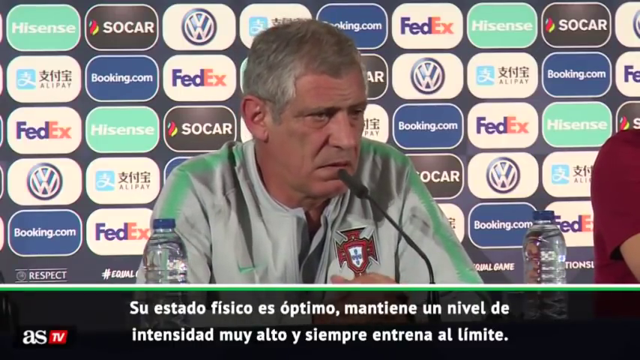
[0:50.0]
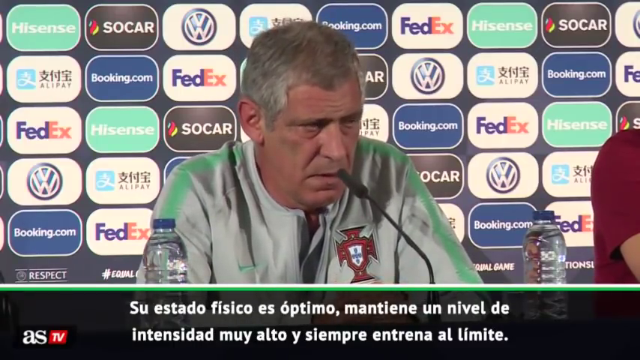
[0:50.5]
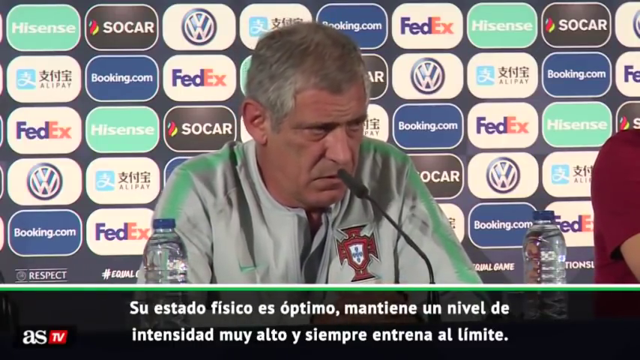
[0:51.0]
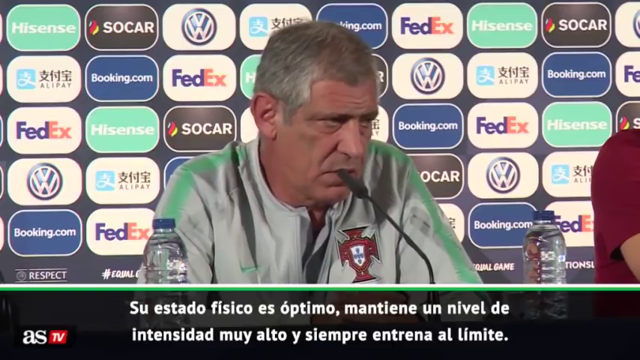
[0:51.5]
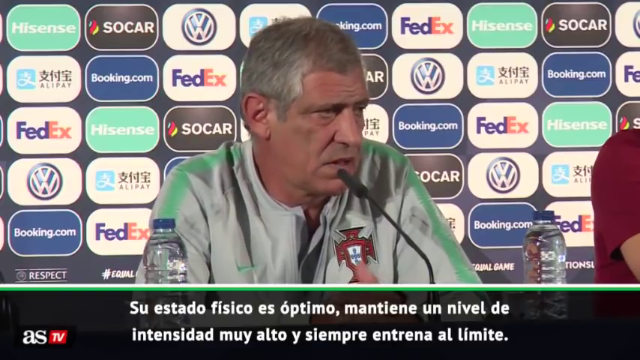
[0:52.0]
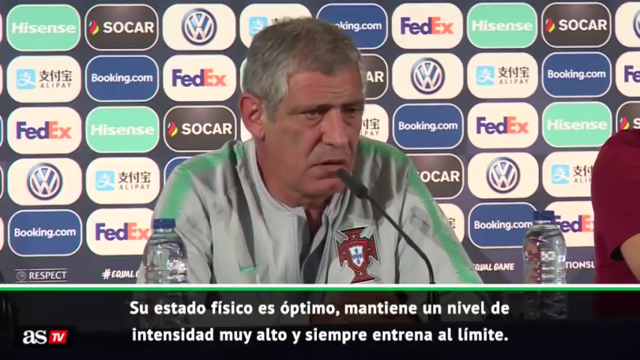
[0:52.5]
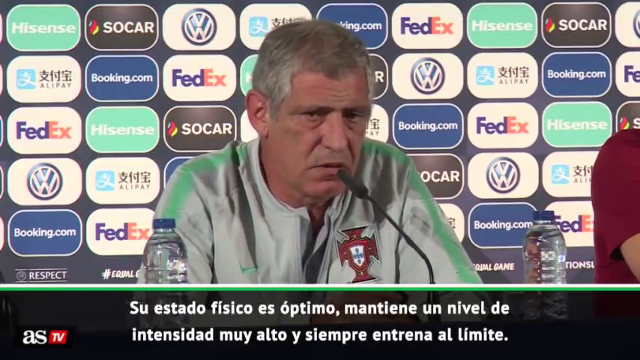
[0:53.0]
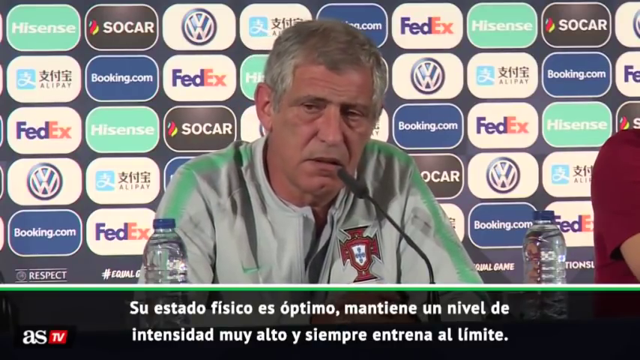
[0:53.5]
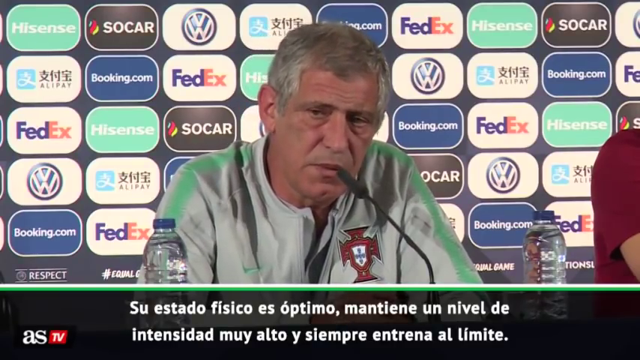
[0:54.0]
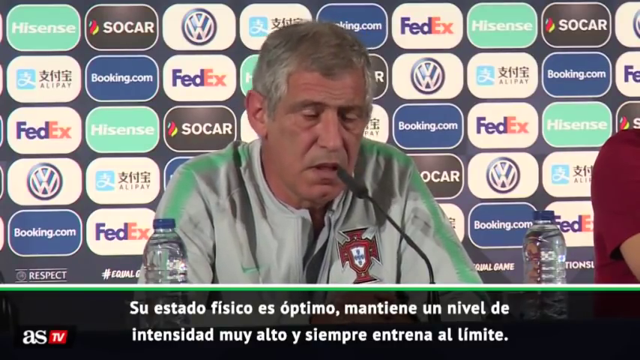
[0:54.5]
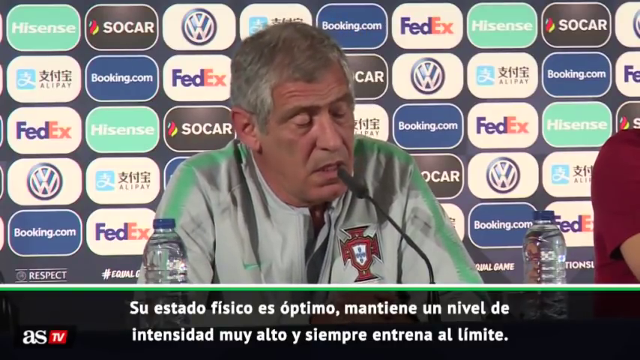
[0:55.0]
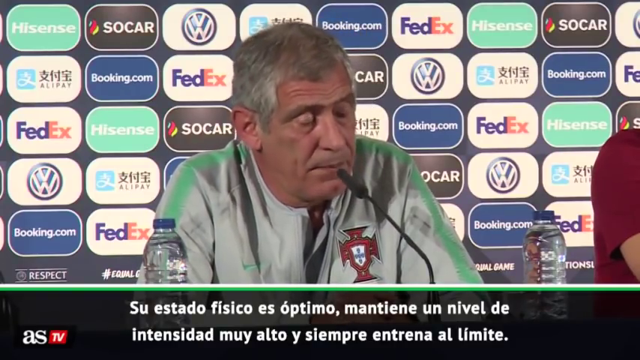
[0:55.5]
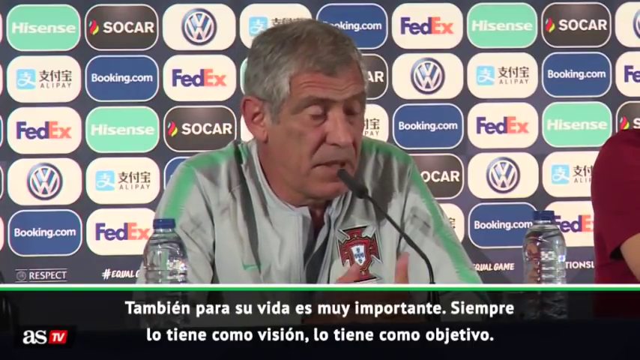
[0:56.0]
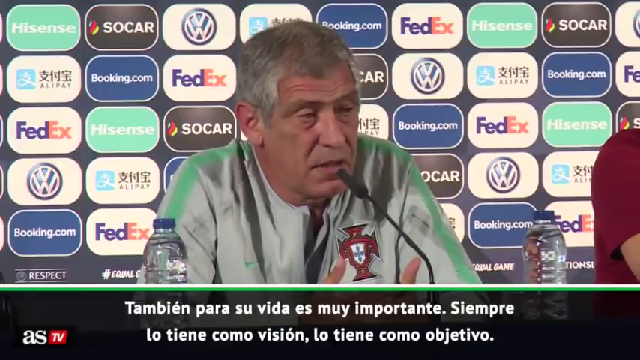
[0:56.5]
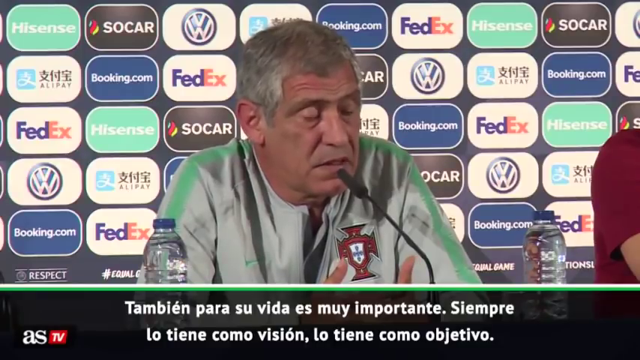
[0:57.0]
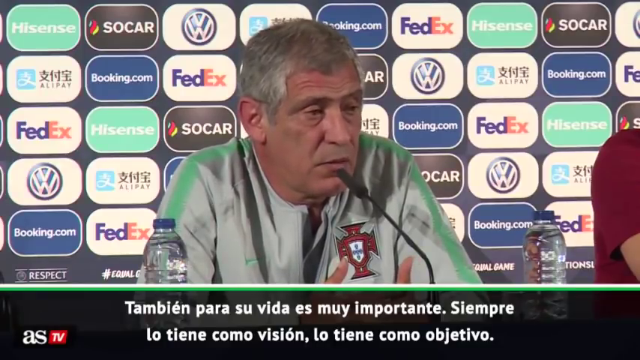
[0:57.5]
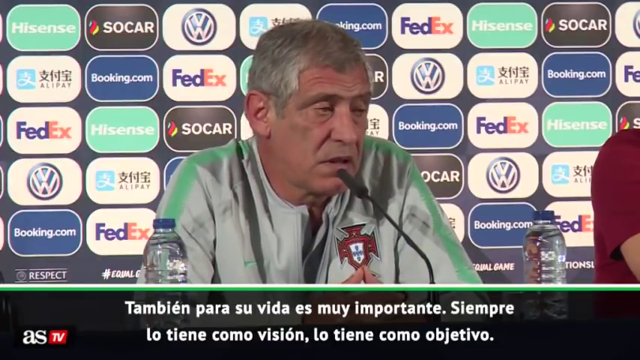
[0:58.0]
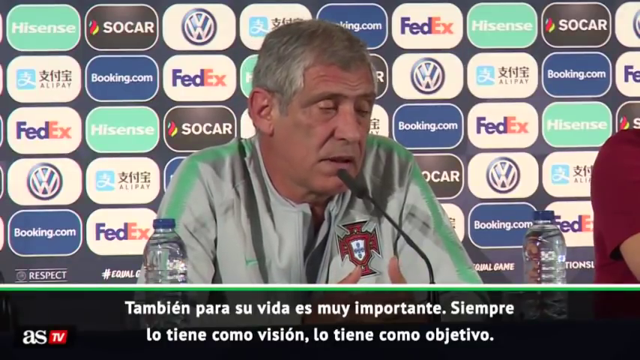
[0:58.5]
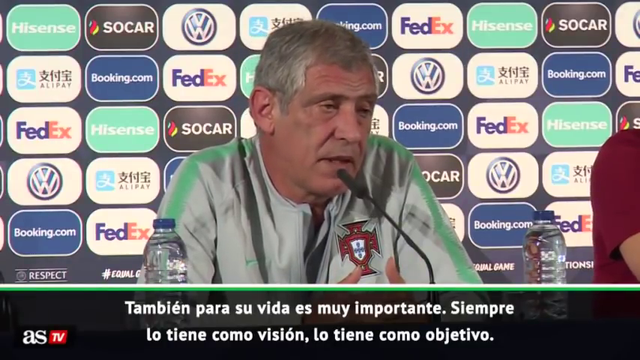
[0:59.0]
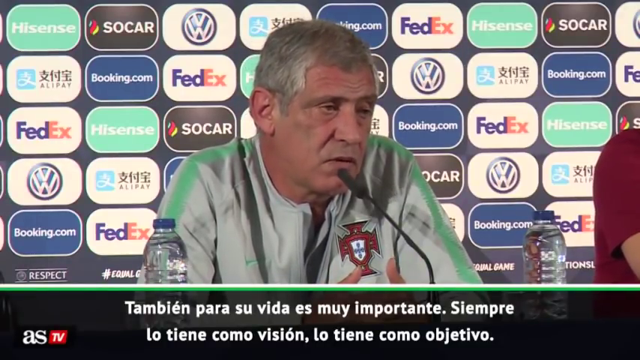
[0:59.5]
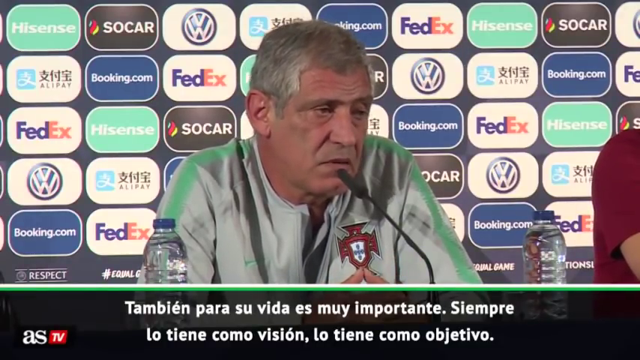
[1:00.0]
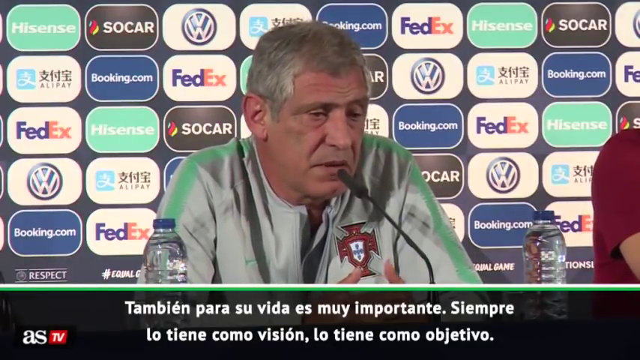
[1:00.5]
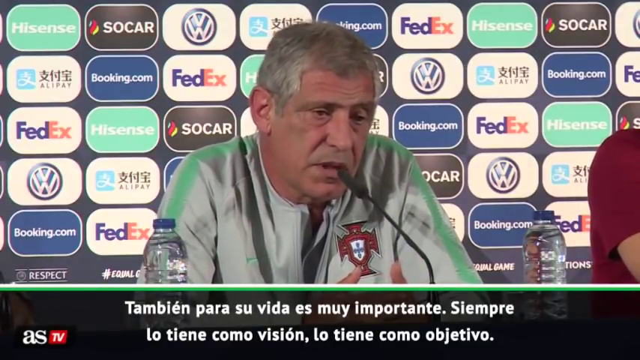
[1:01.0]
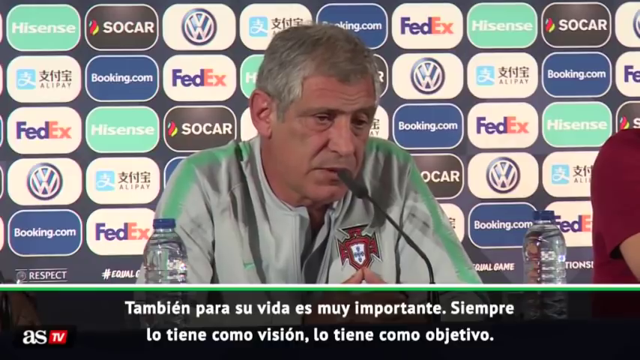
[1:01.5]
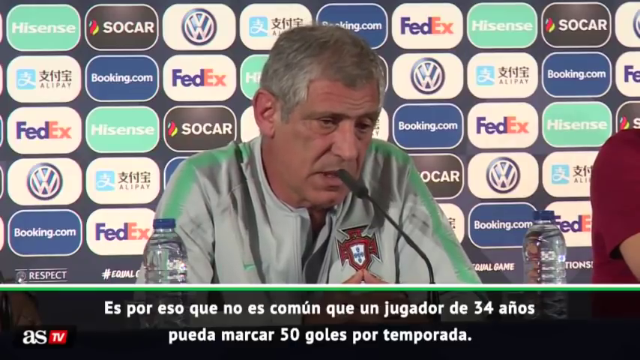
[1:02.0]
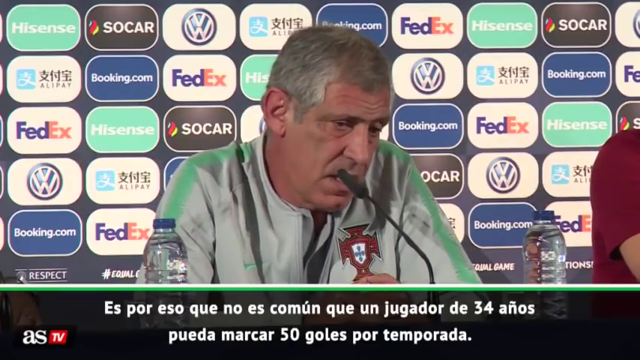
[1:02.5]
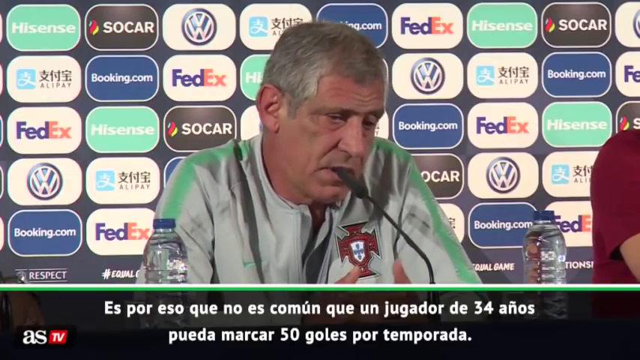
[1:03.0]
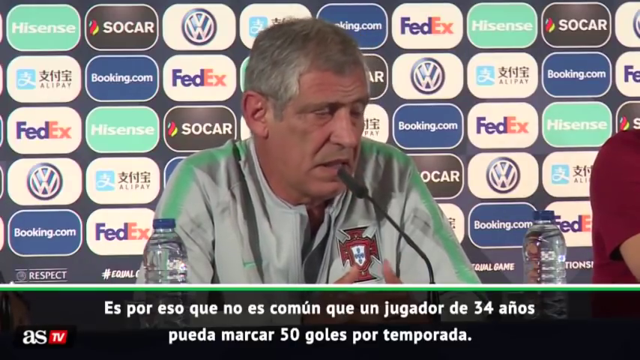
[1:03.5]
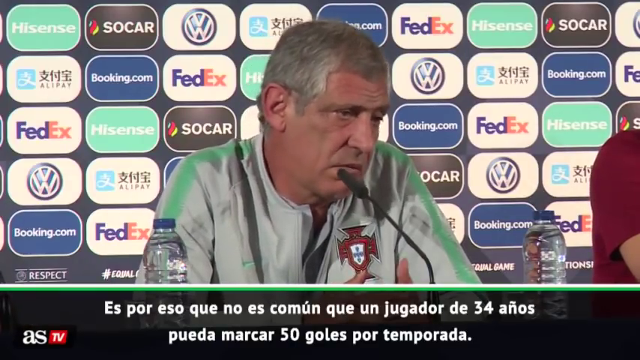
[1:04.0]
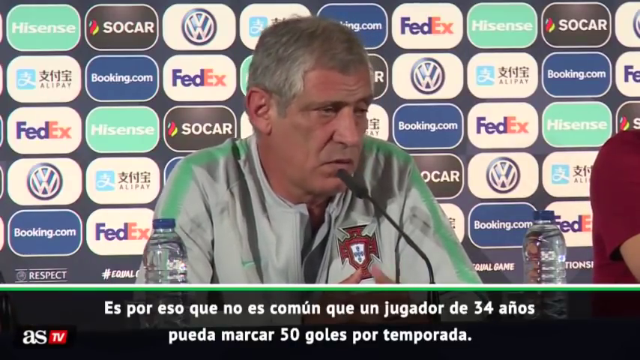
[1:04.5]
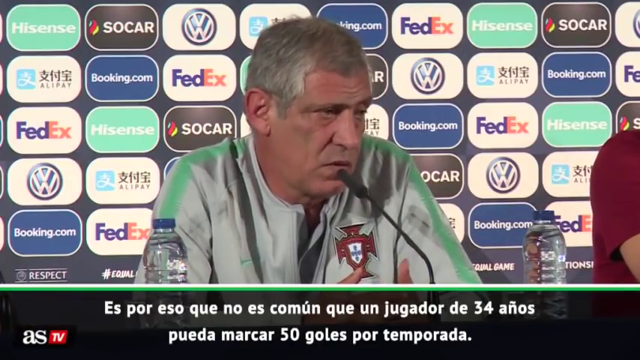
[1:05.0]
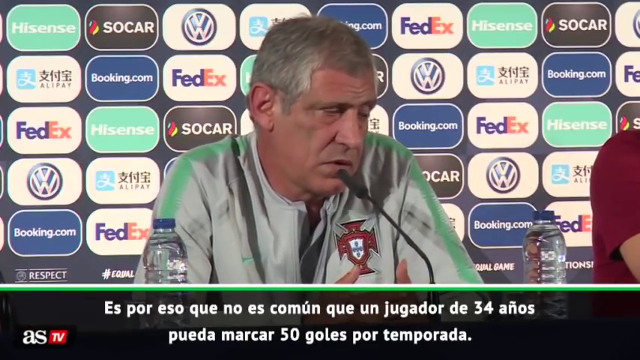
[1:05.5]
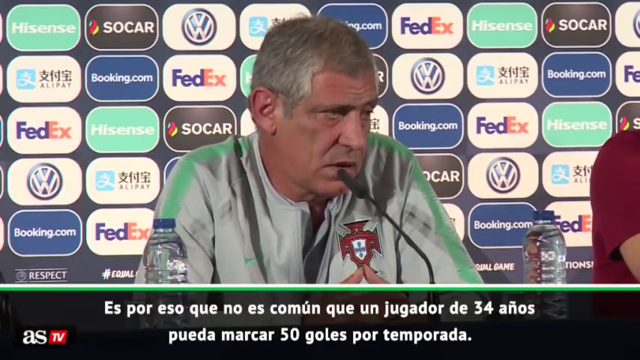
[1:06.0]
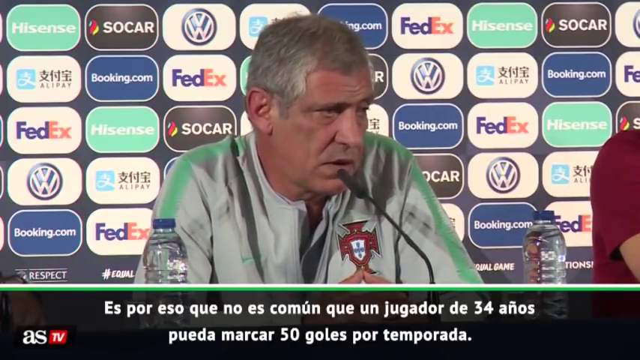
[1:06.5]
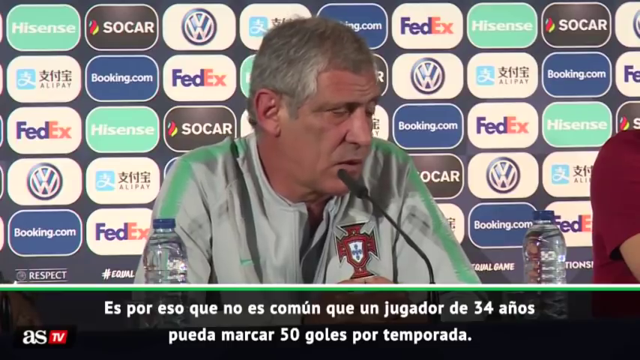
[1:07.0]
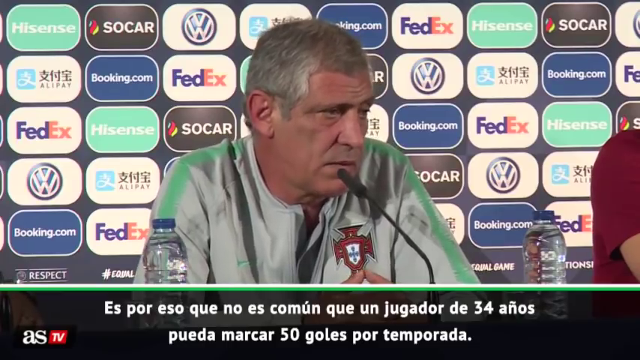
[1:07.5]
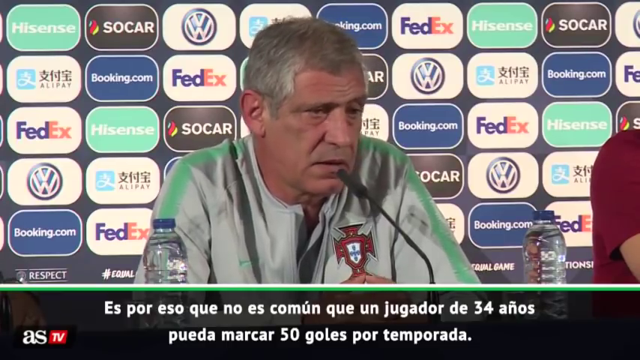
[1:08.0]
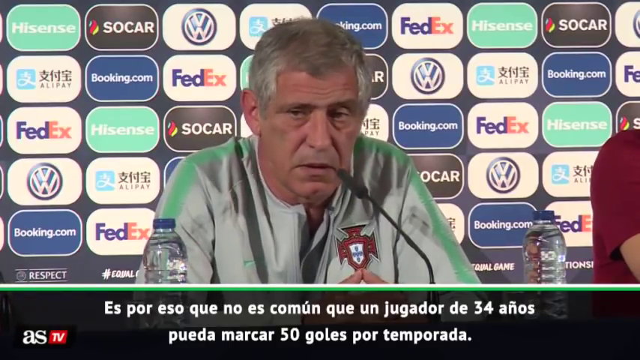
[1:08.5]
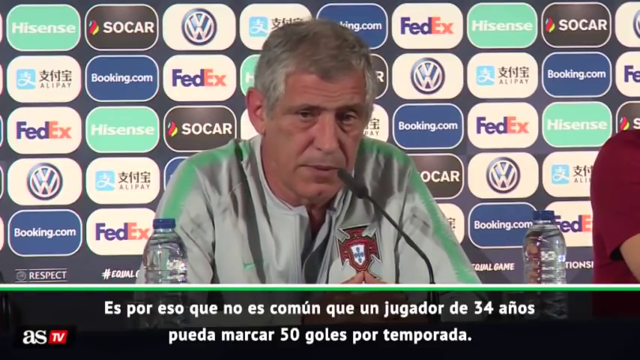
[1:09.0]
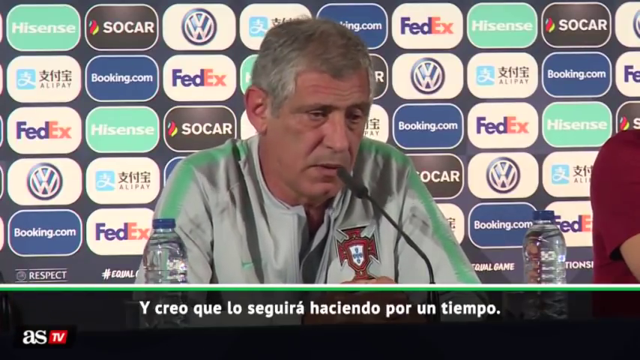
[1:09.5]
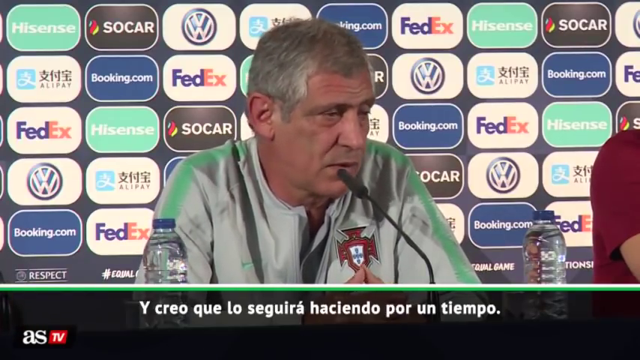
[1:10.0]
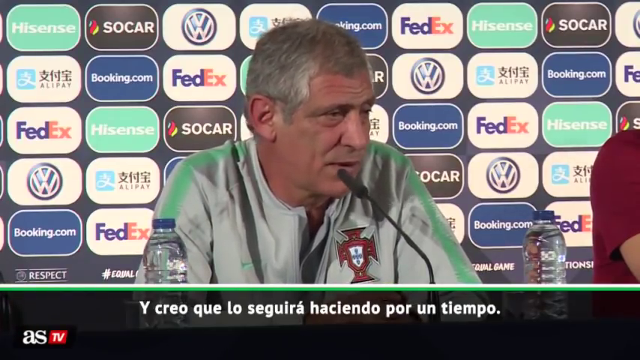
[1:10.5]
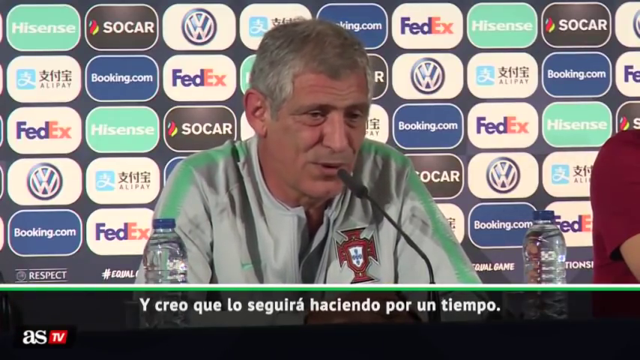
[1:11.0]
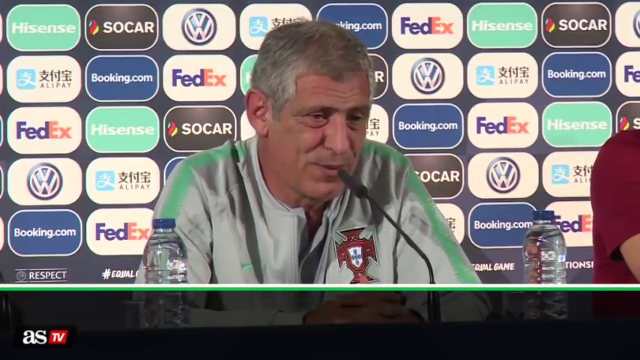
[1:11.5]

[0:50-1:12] The man appears to be looking off to the right as he speaks. His face is very somber, with not much emotion. He is clean-shaven, his eyes are a little droopy as if he is tired, with big bags under them, and his eyebrows are white. Some of the company logos in the rectangles on the wall behind him appear to be in a foreign language, looking like either Chinese or Japanese. He touches his thumbs together, pulls them apart as if making a point, and brings them back together. White subtitles are still along the bottom, presumably his words as he answers questions. Beneath his jacket he wears a collared shirt that appears to be the same gray color as the jacket, with the top button unbuttoned. He keeps talking, and then the video abruptly ends.